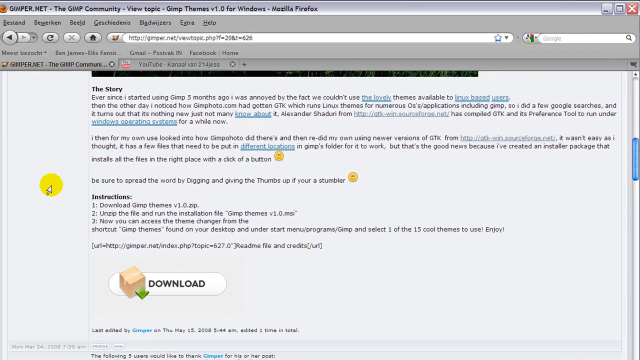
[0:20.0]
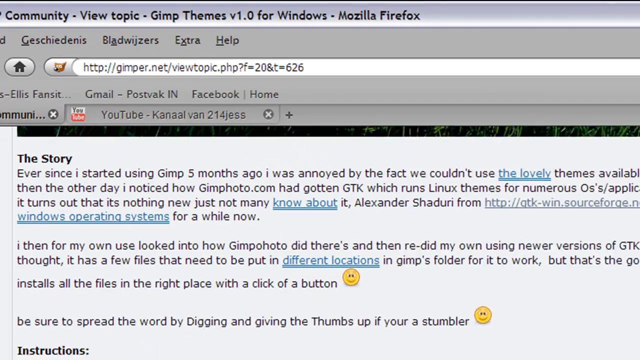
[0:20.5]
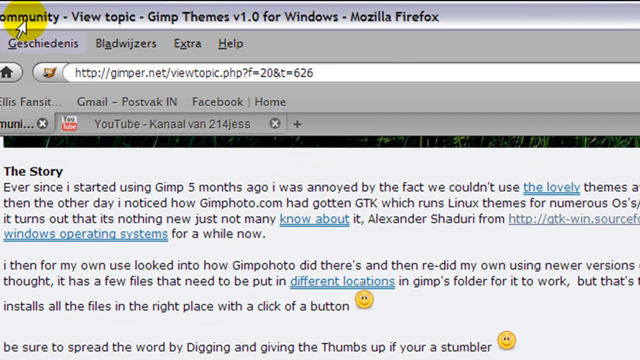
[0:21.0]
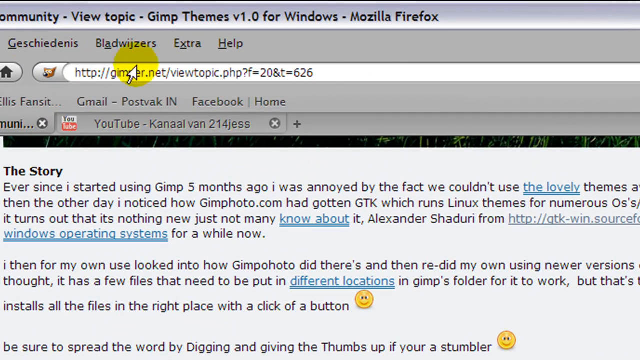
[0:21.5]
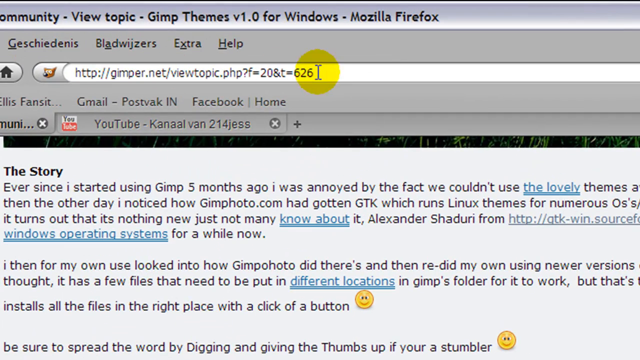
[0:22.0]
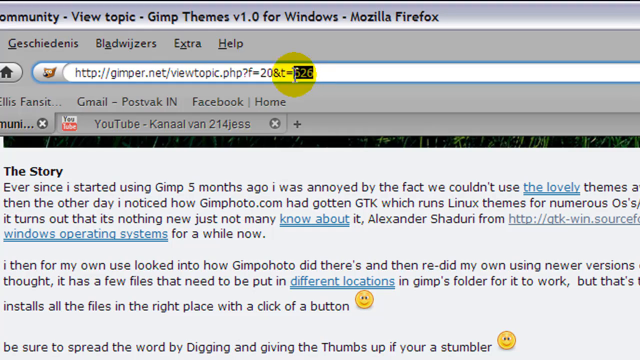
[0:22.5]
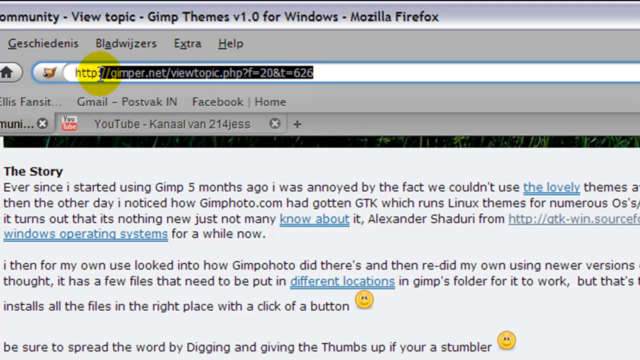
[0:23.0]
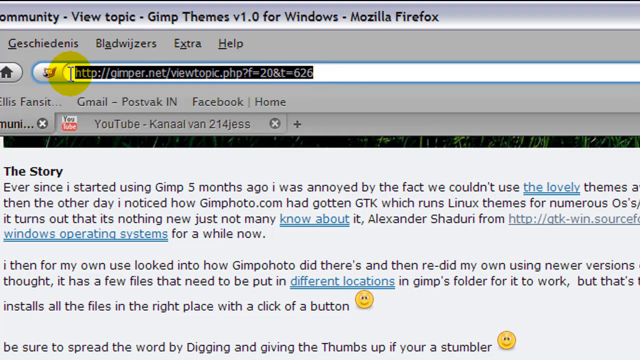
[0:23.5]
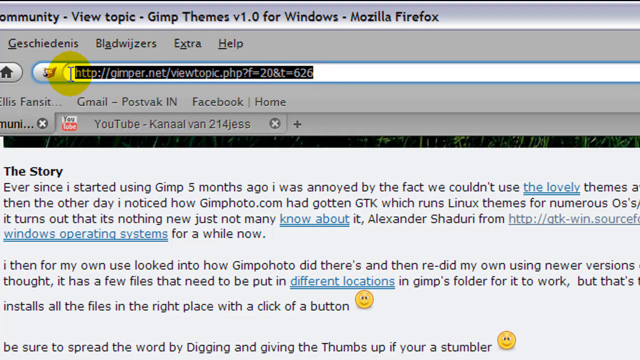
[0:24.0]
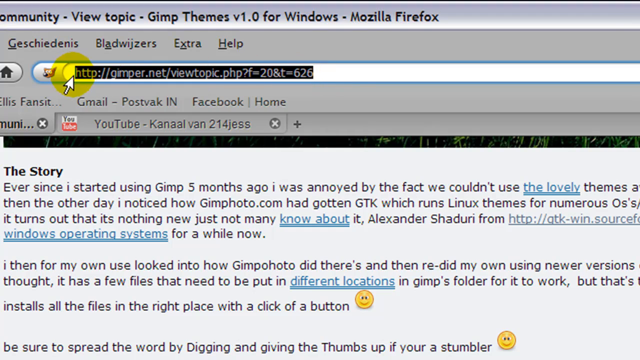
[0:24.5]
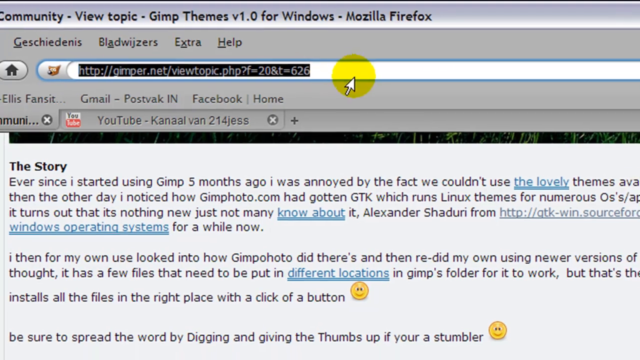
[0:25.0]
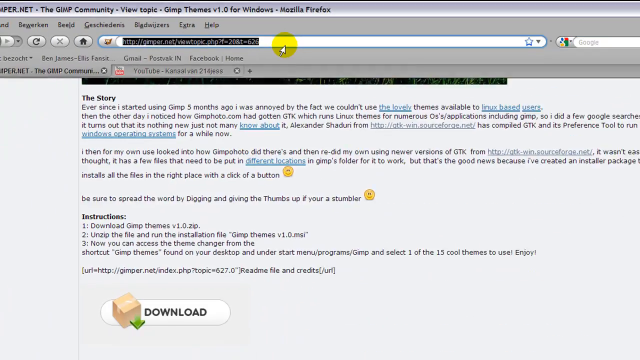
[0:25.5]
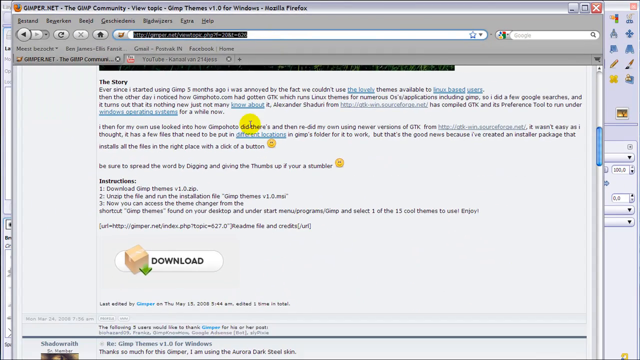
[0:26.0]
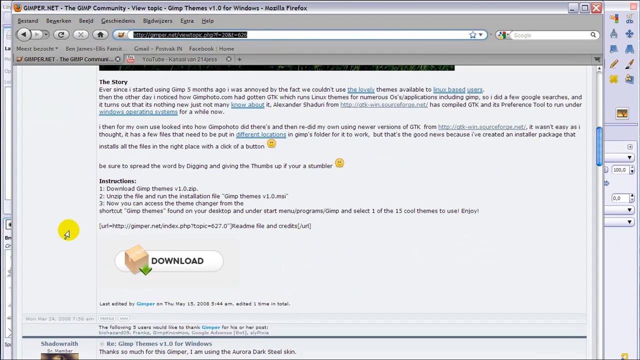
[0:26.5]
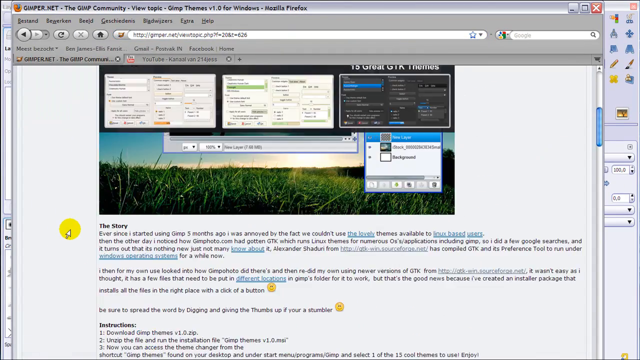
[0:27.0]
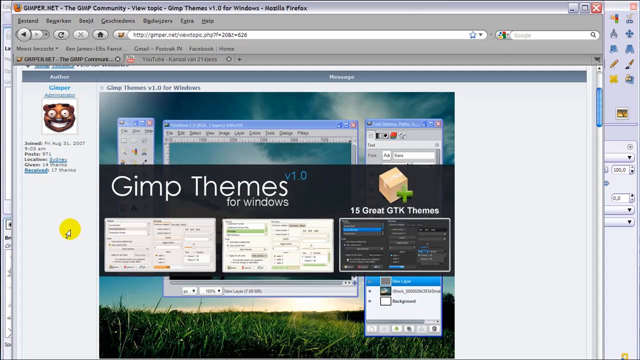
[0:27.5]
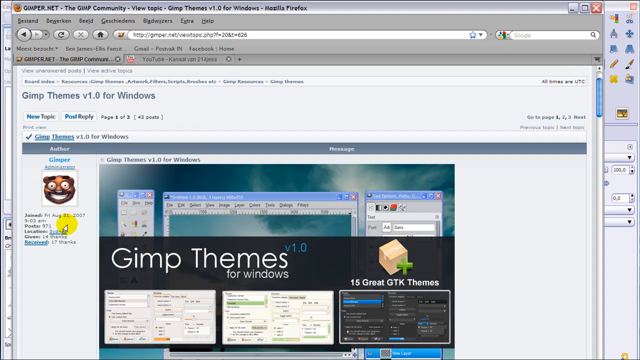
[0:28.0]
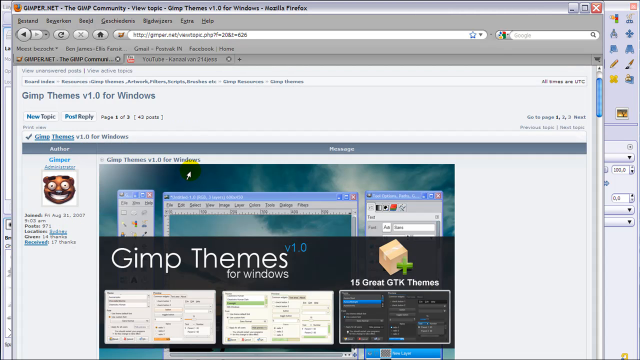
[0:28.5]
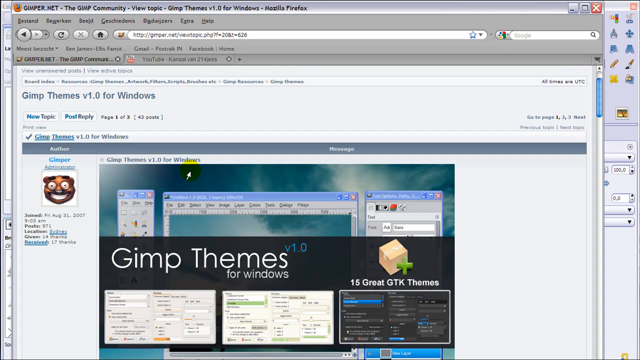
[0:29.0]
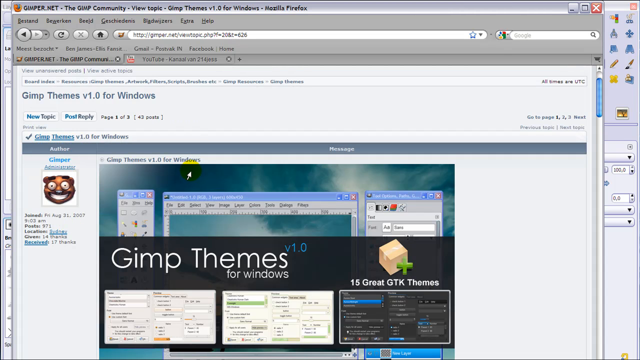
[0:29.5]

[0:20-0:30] A very vintage version of the Firefox web browser shows a webpage with multiple lines of black text, with the mouse cursor, circled in yellow, on the left side. The text reads "The story. Ever since I started using GIMP five months ago, I was annoyed by the fact that we couldn't use the lovely themes available to Linux-based" and continues onward. The screen then zooms in on the webpage's URL, and the cursor slowly moves from left to right over it. The cursor turns into the text input cursor, and it is dragged over the URL from right to left, highlighting it in black. The screen zooms out, the cursor goes to the bottom of the page, and the user scrolls up the webpage.